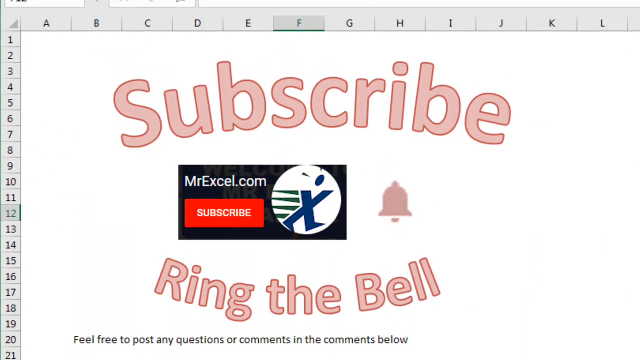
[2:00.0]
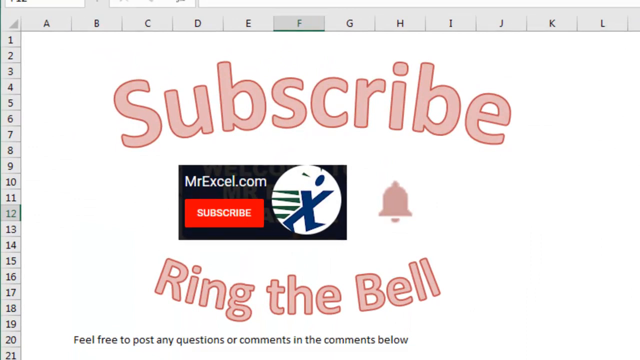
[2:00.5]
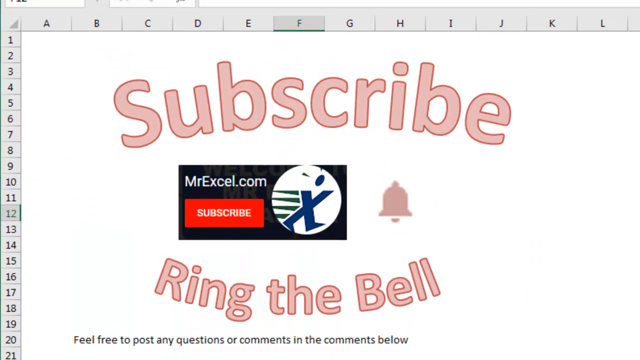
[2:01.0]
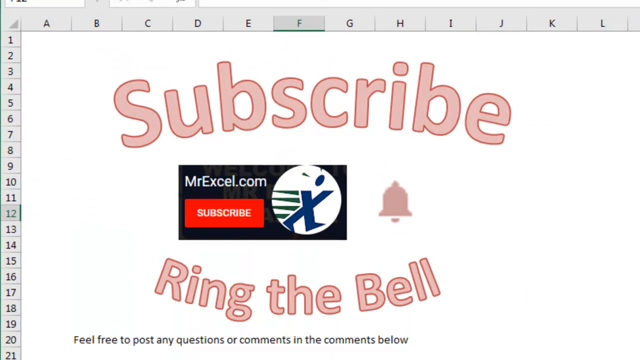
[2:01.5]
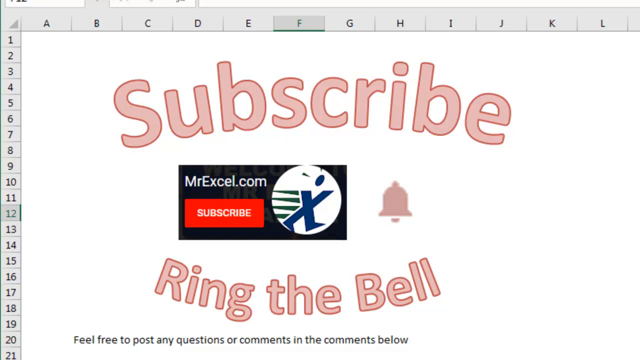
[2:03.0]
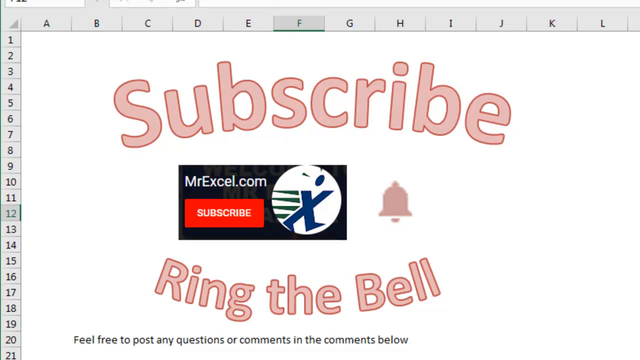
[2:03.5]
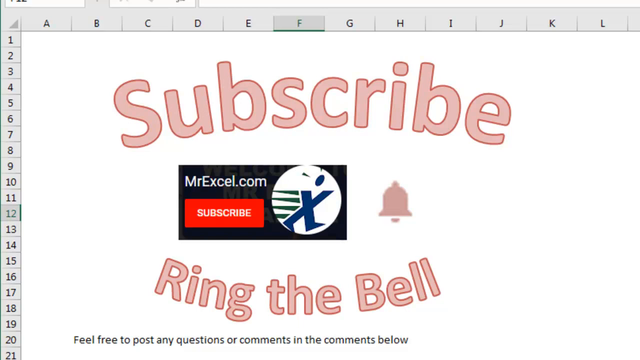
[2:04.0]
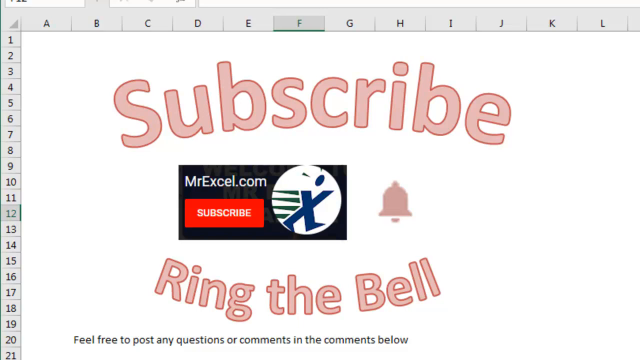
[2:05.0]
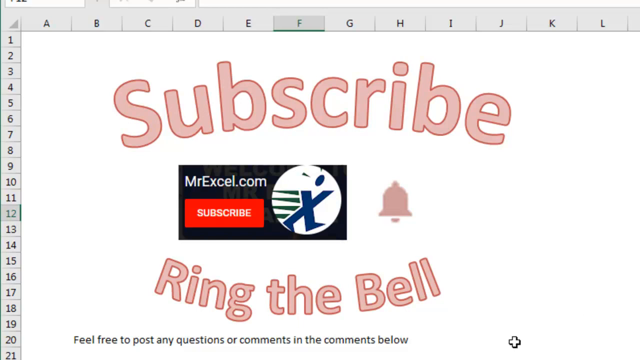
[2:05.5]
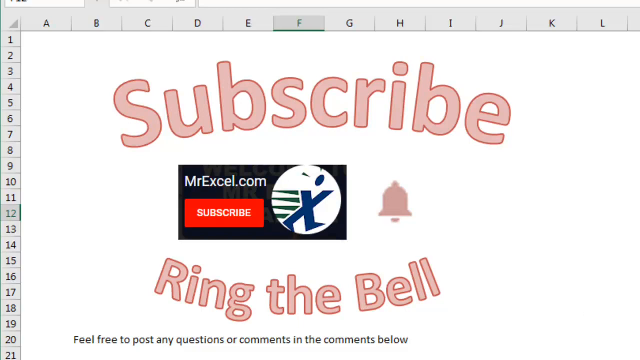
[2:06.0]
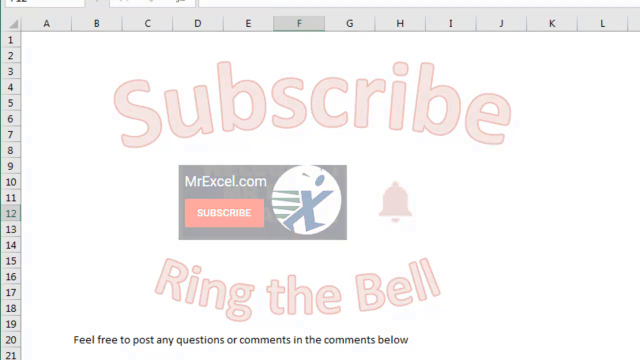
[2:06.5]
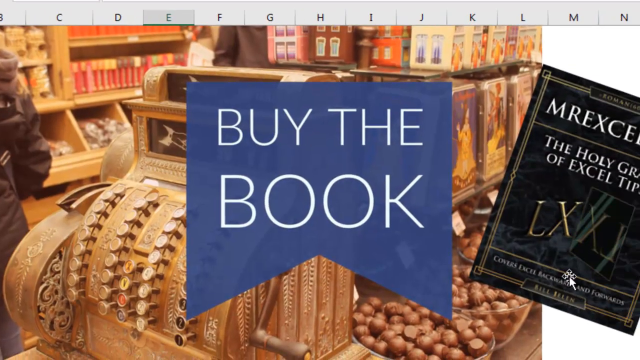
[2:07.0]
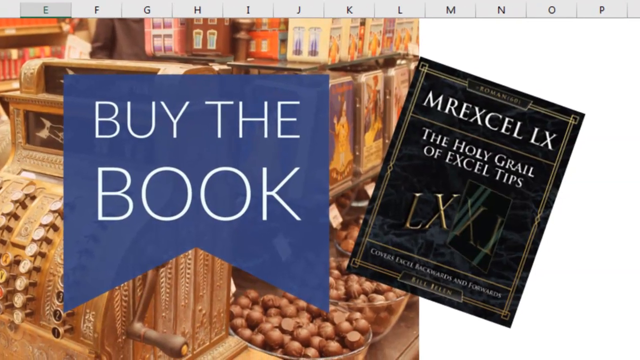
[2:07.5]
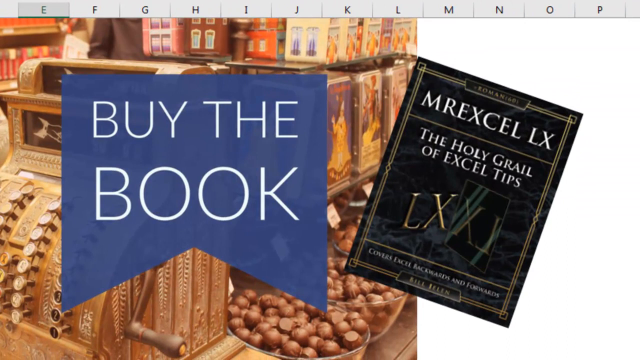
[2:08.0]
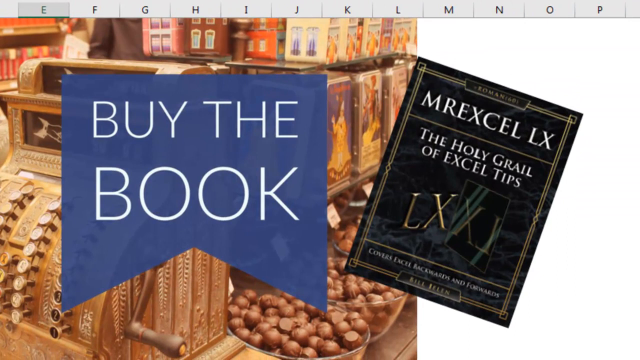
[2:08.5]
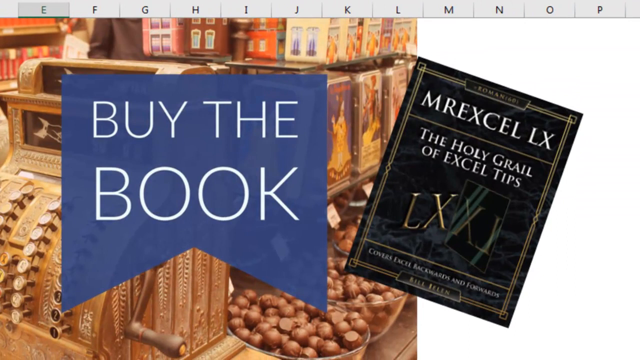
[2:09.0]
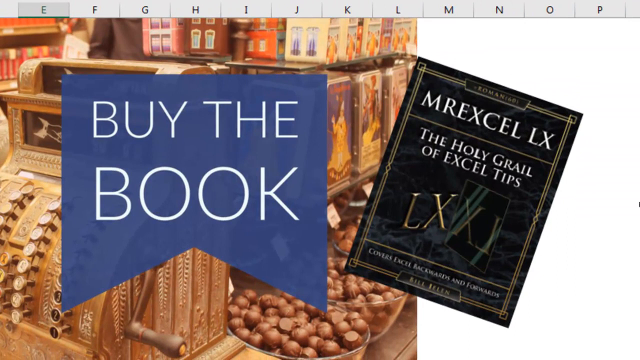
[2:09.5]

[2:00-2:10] An Excel spreadsheet is shown on a laptop, with column letters A through L across the top and row numbers 1 through 19 down the left side. Instead of cells in the middle, there is a graphic on a white background: large, kind of pink text reading "subscribe", with "ring the bell" underneath, and a logo for a business called MrExcel.com between the two.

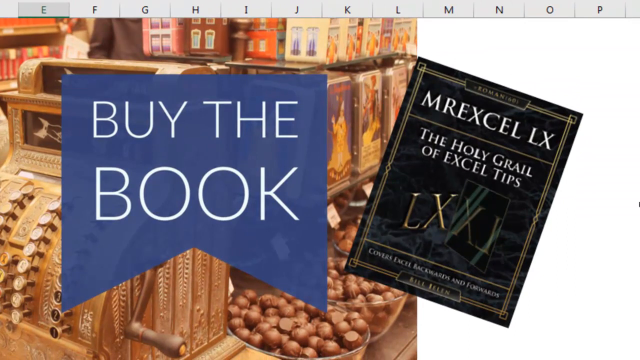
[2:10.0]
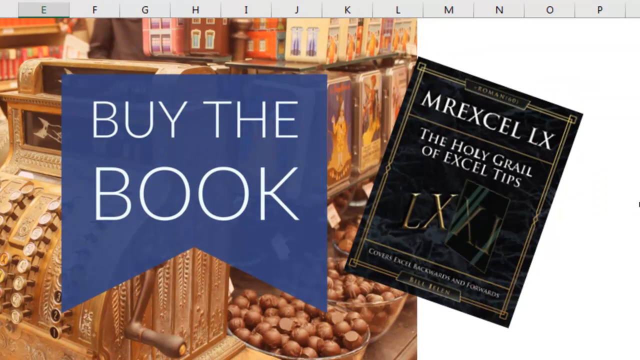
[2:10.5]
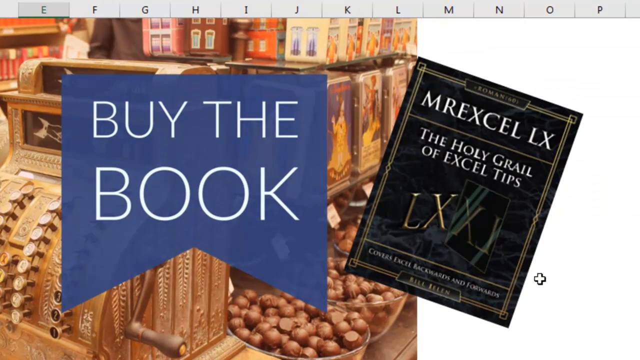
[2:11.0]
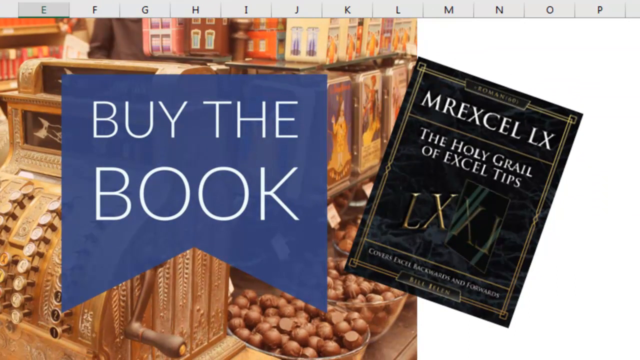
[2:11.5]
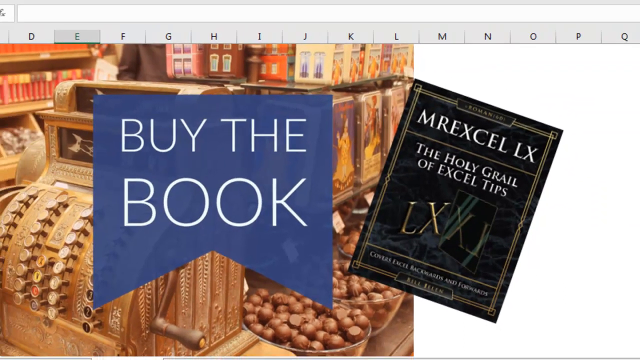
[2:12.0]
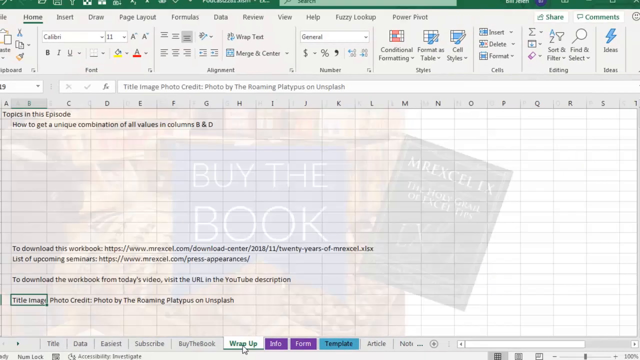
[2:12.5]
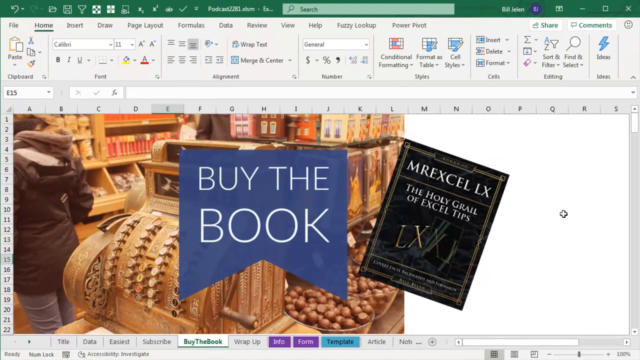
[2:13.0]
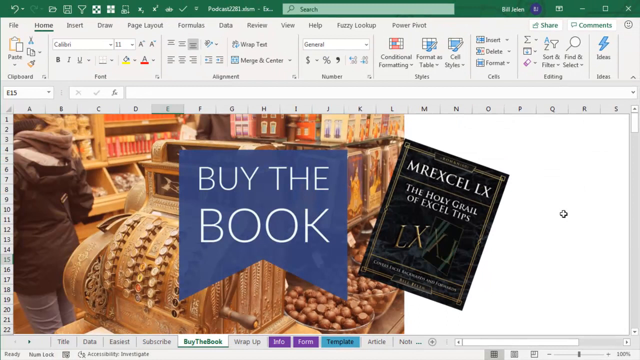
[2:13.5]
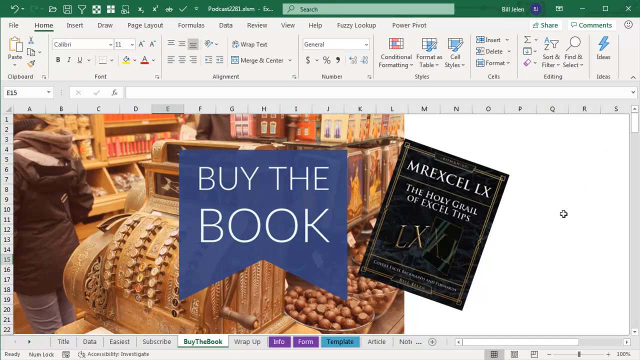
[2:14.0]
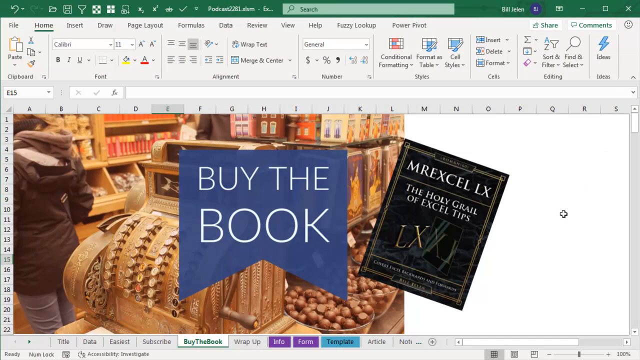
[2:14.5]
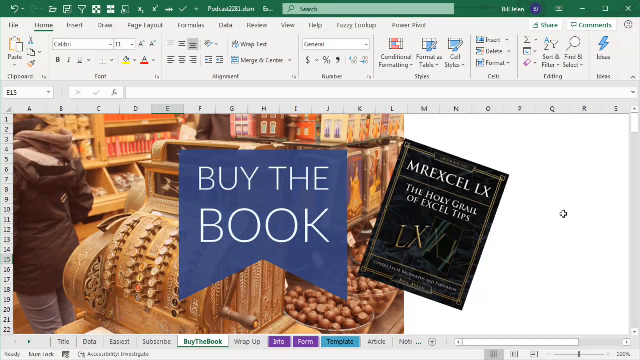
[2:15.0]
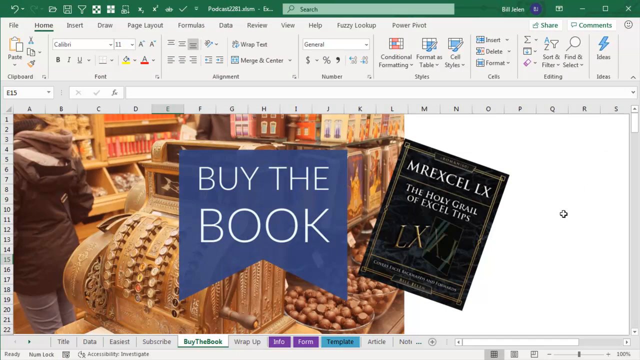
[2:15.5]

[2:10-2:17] Computer-generated graphics appear in Excel, including a black square book cover with white lettering for a book called Mr. Excel LX, the Holy Grail of Excel tips. To its left is a blue shape, square at the top with a V shape at the bottom, with white text reading "buy the book", advertising the book. The view then kind of pans out, revealing that the image is superimposed on an Excel spreadsheet. A kind of cross-shaped mouse cursor is to the right of the book.